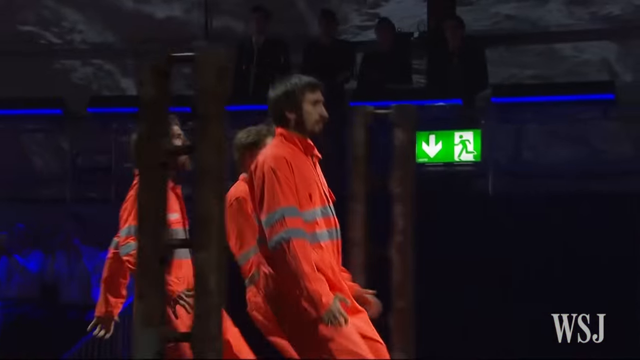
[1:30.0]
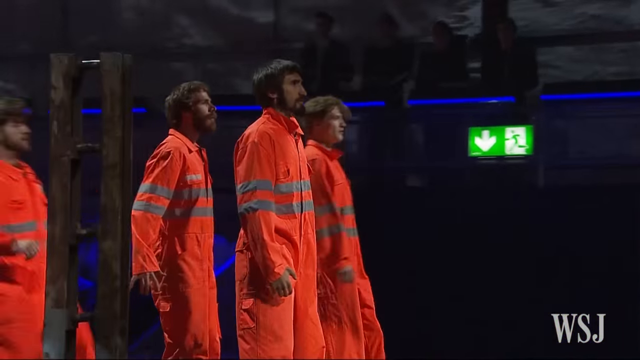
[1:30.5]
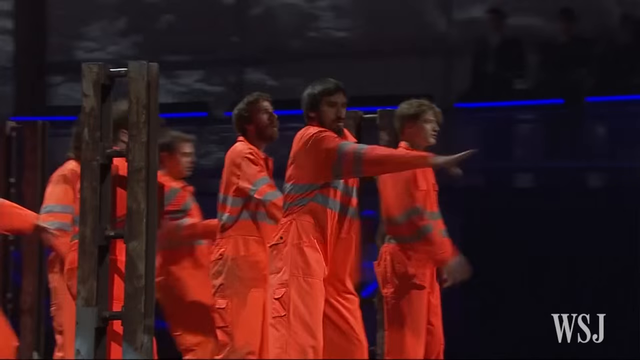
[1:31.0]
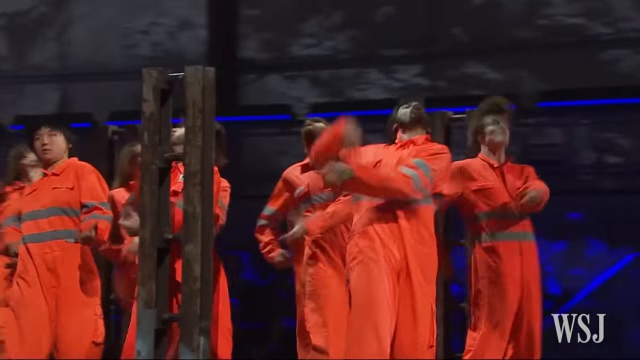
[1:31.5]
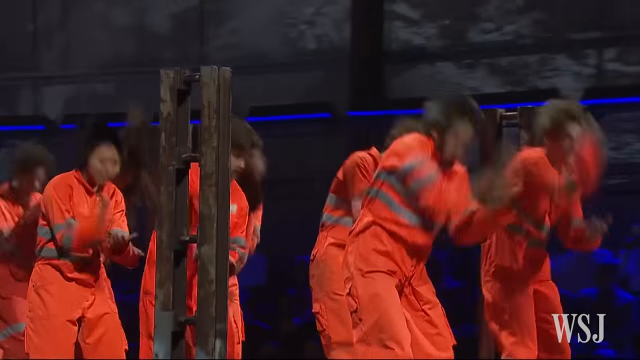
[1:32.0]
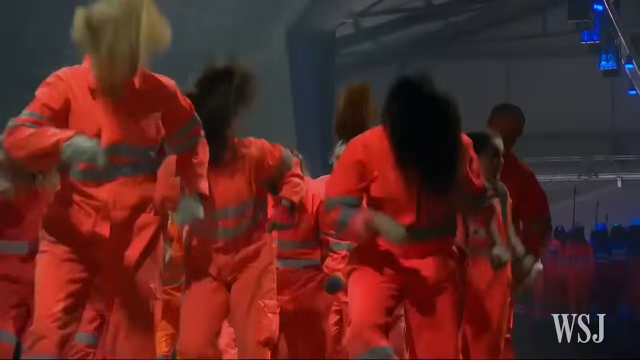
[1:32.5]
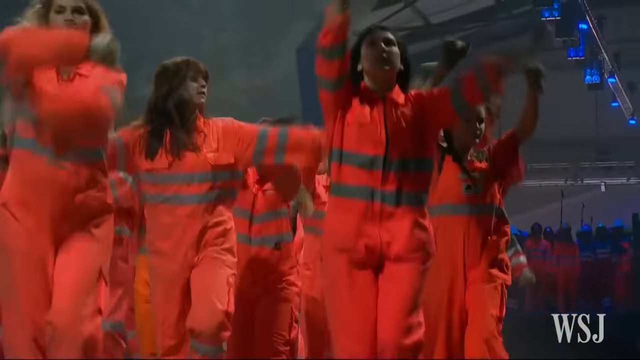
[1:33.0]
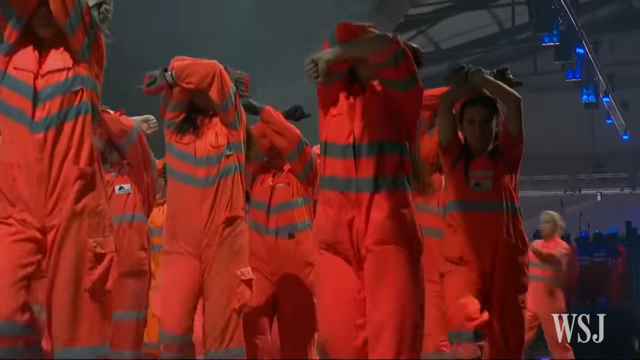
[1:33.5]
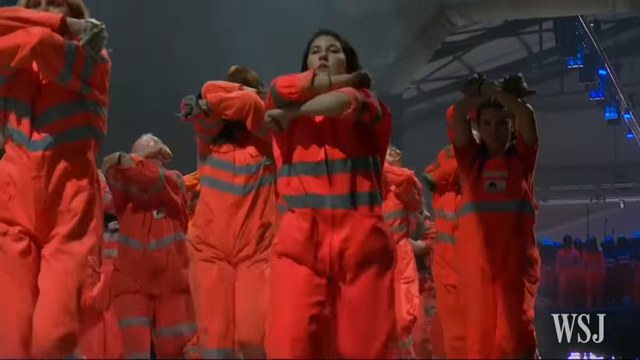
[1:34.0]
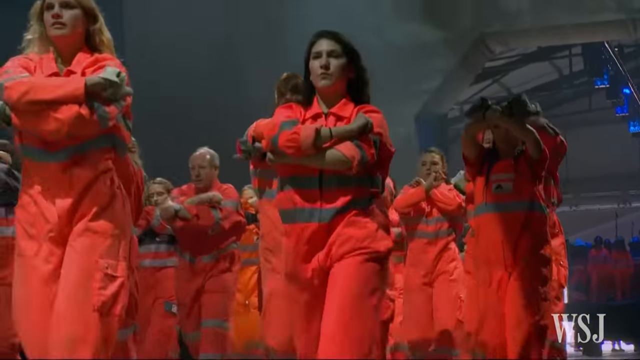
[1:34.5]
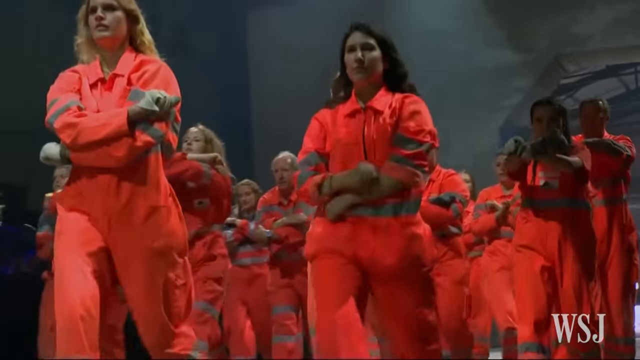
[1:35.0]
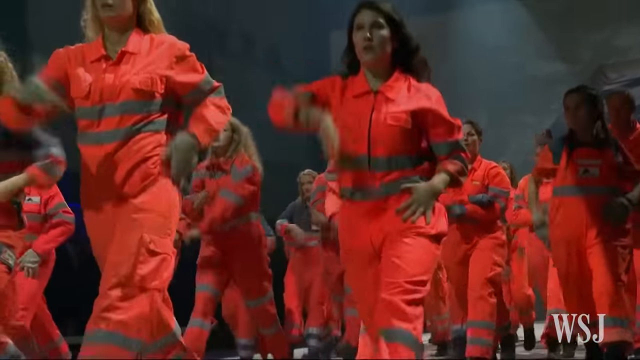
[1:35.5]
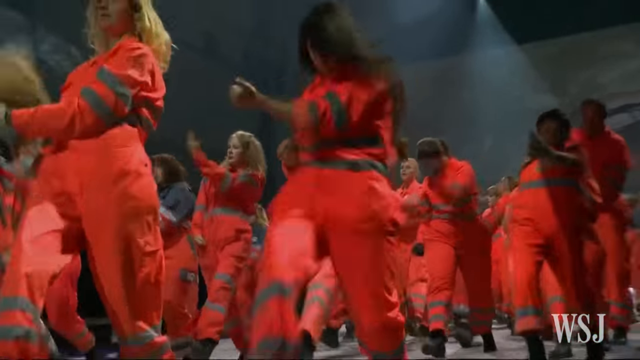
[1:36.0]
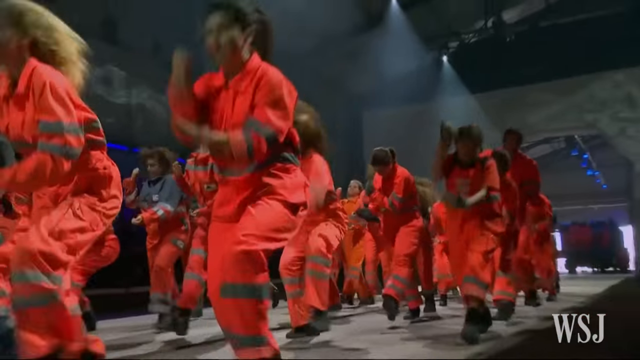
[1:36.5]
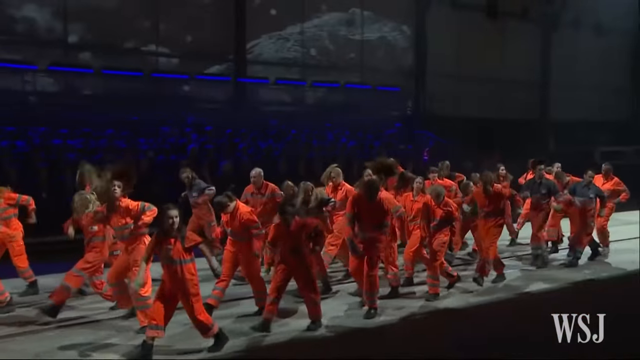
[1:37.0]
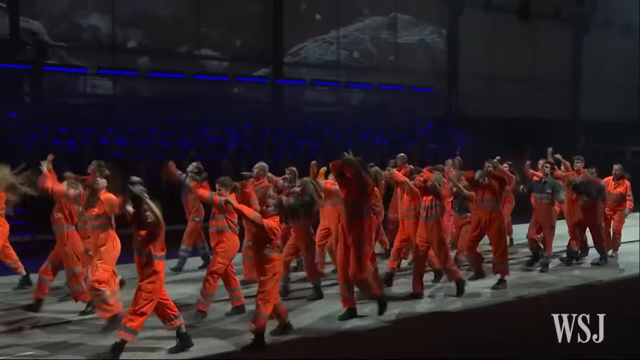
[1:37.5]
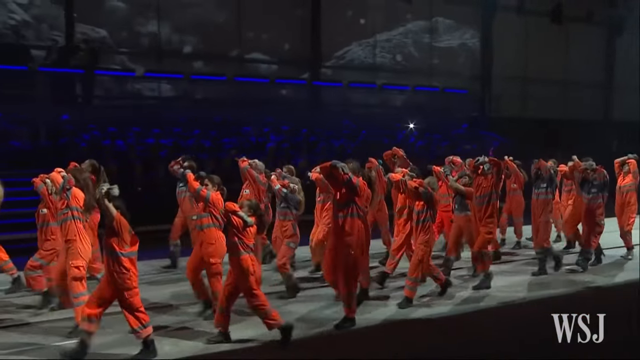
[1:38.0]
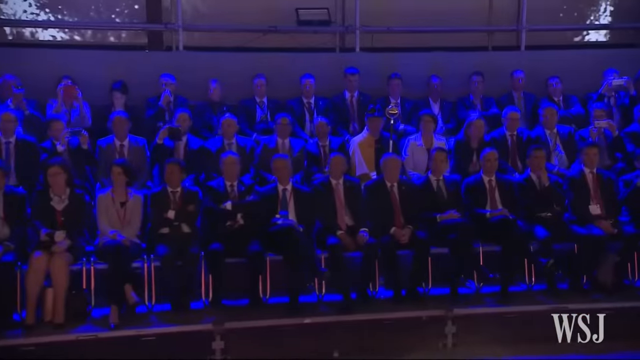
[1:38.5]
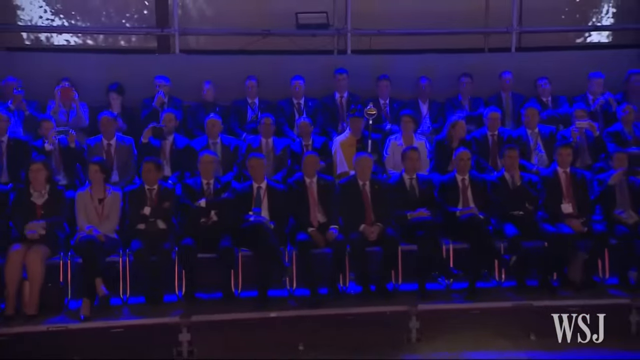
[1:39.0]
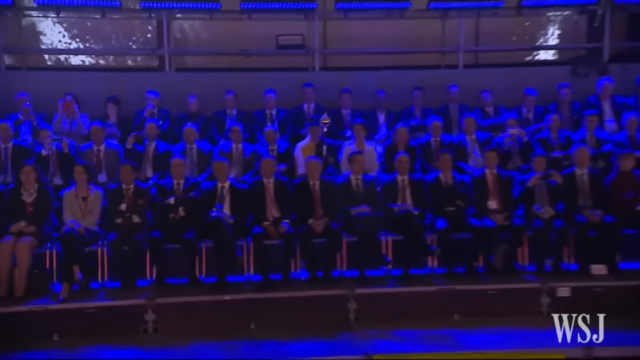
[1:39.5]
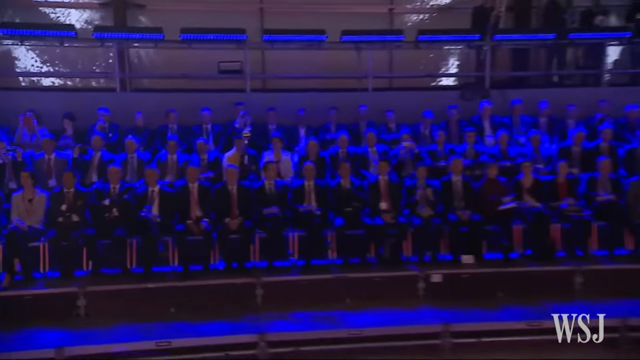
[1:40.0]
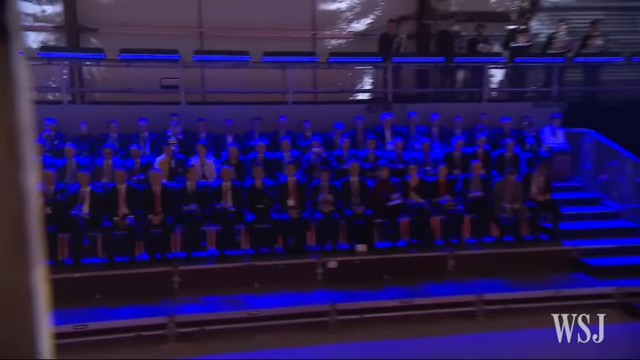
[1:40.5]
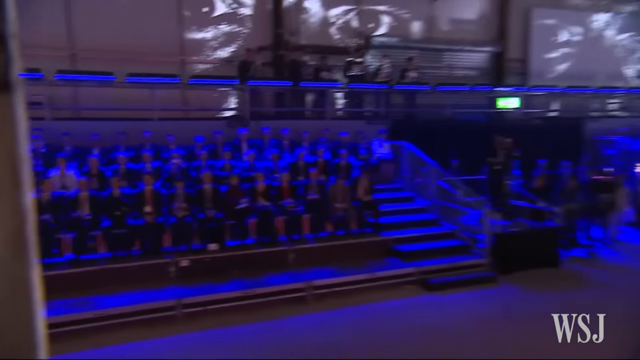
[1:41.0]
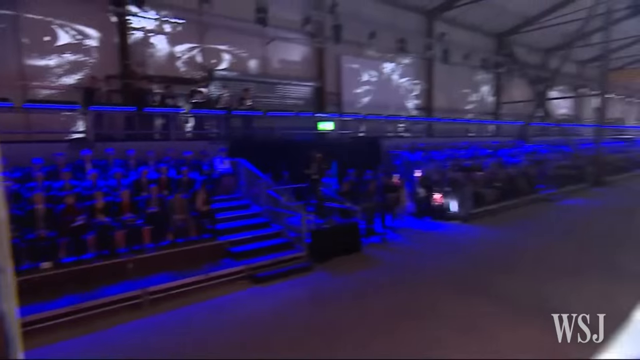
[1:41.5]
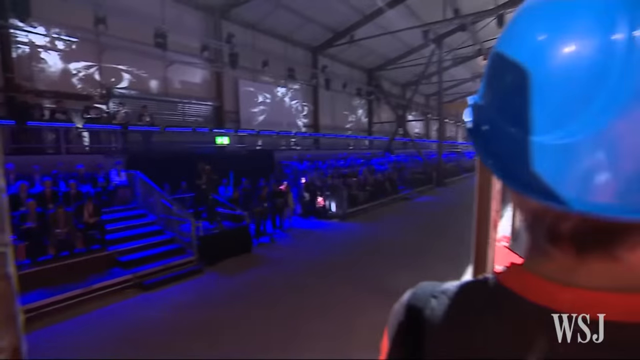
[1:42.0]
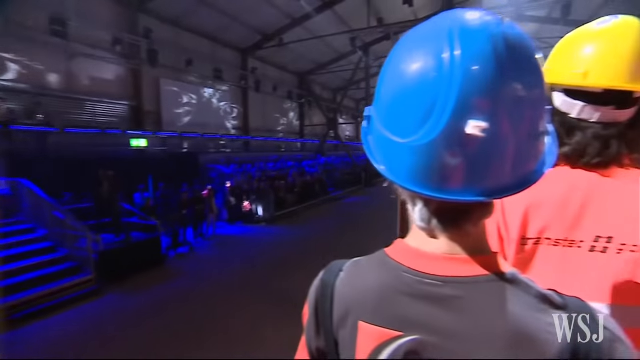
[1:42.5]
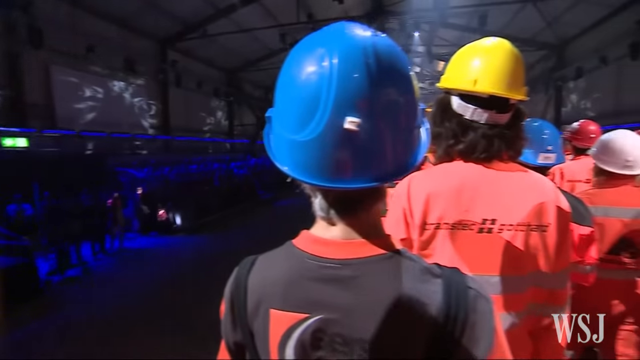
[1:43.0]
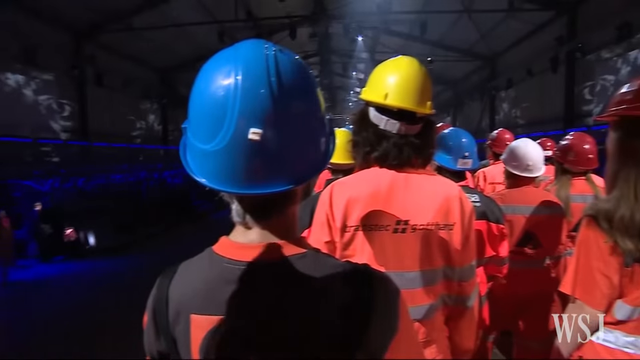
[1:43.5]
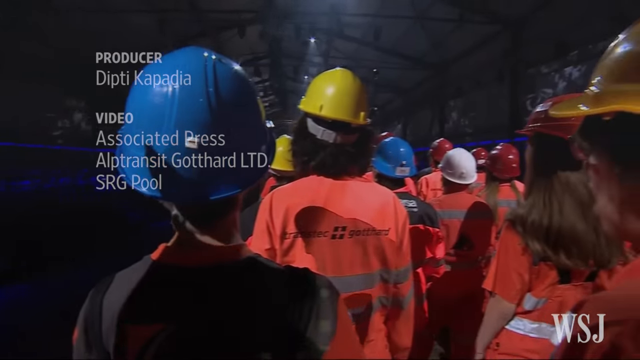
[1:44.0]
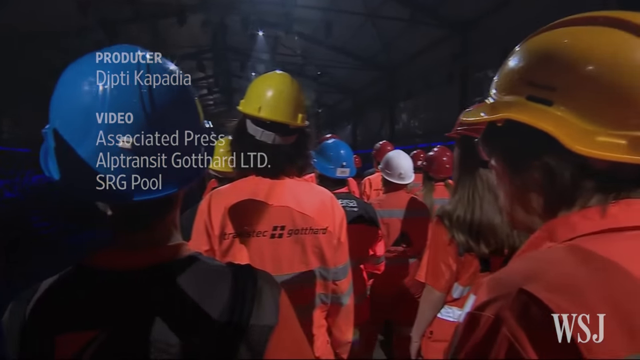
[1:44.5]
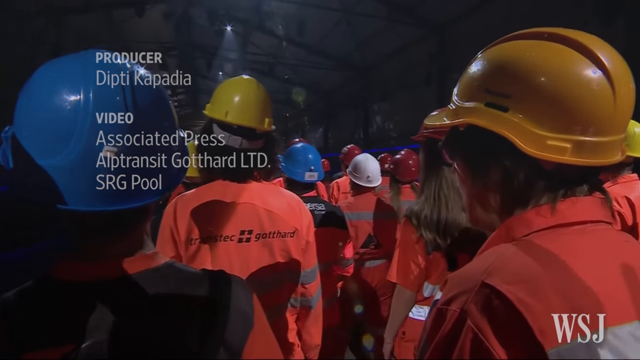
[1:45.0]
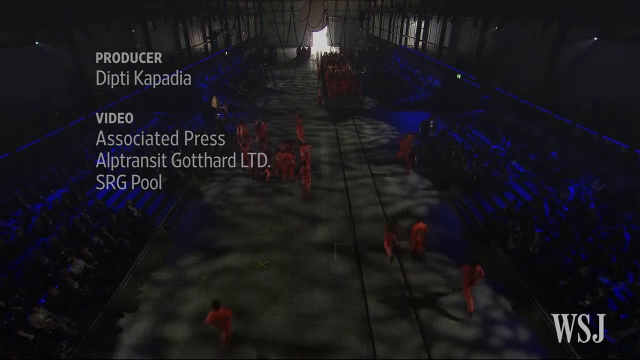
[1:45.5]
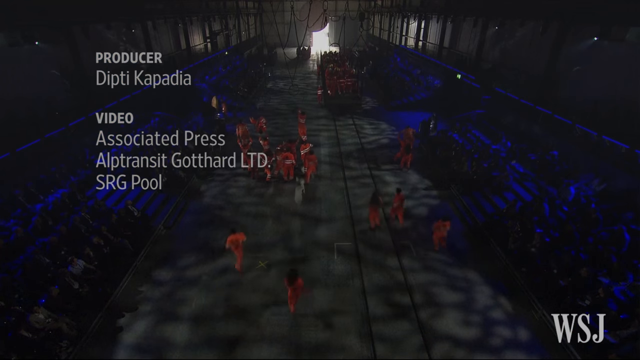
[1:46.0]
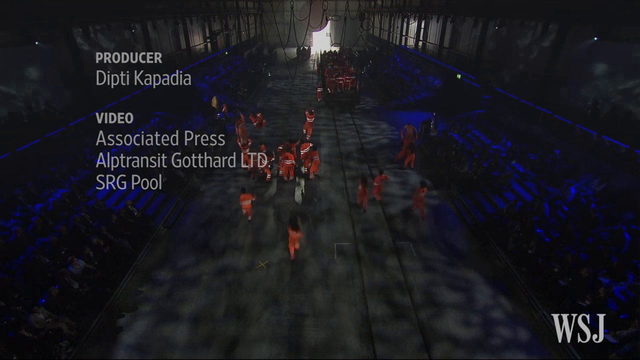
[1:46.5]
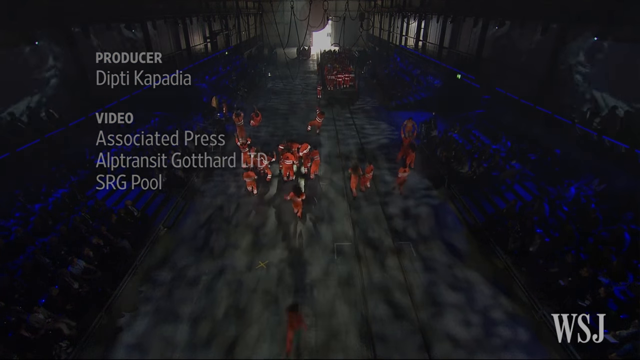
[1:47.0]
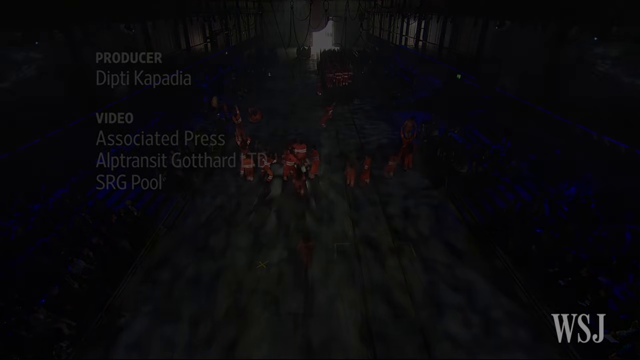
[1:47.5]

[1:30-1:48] People in orange suits with reflective stripes, both women and men, perform choreographed dancing in sync; it looks like it may be a play. The view pans over to the stands, where the audience is dressed in ties and suits. The setting is a warehouse of some sort. At the end, the backs of all these people in hard hats are visible, with lights and lots going on, as if they are acting out railway work. They are clustered together as the view pans out.